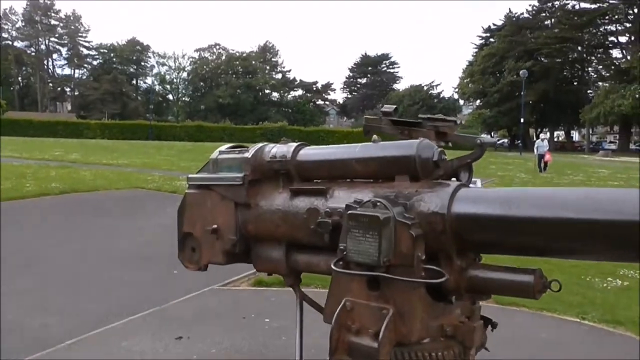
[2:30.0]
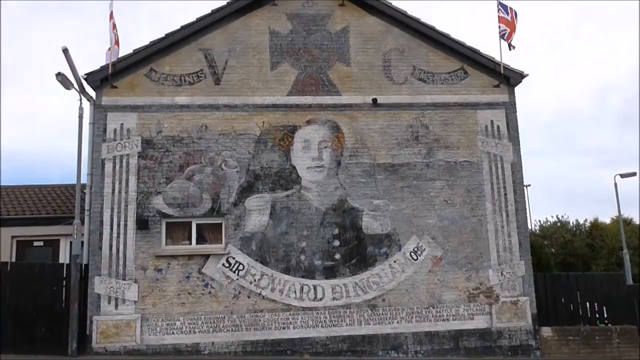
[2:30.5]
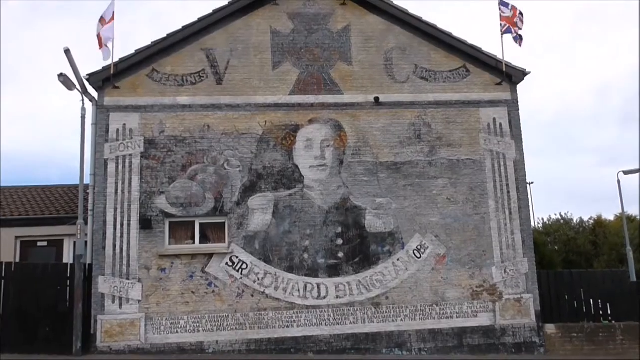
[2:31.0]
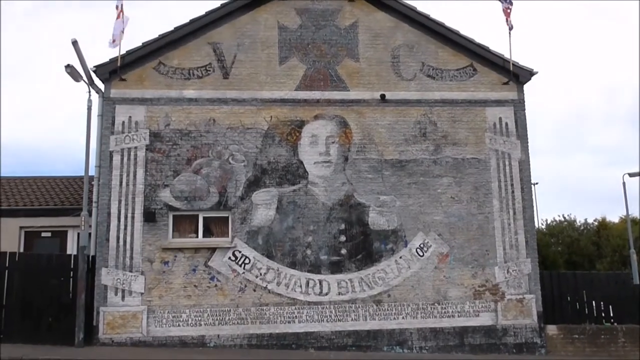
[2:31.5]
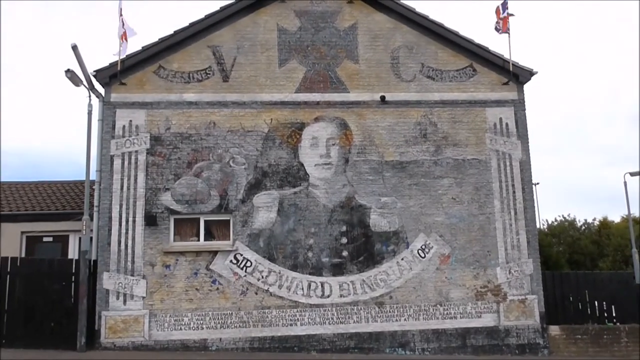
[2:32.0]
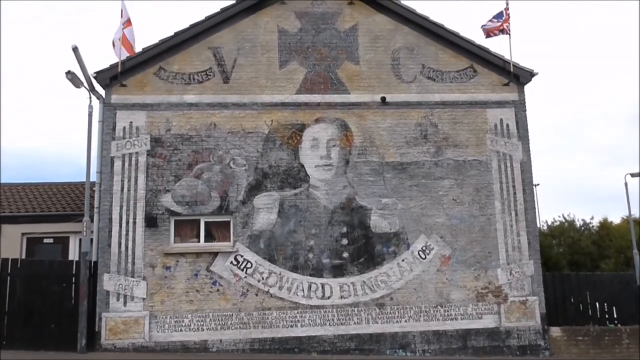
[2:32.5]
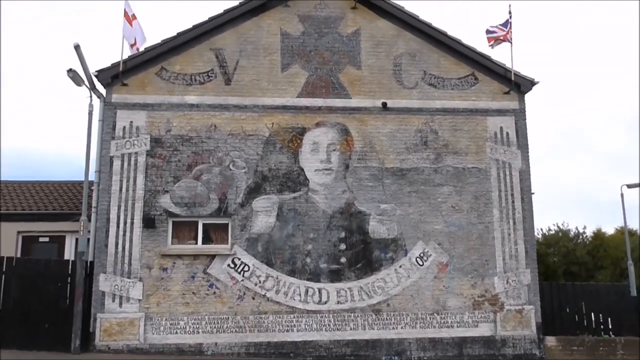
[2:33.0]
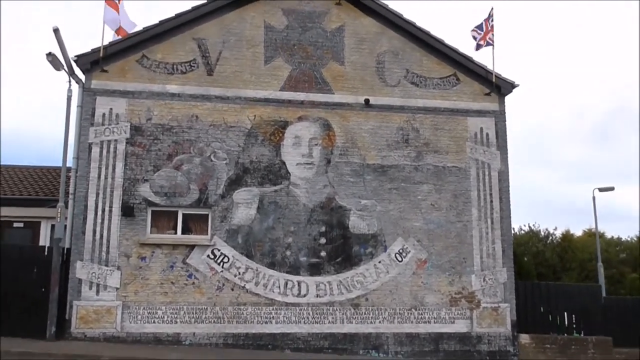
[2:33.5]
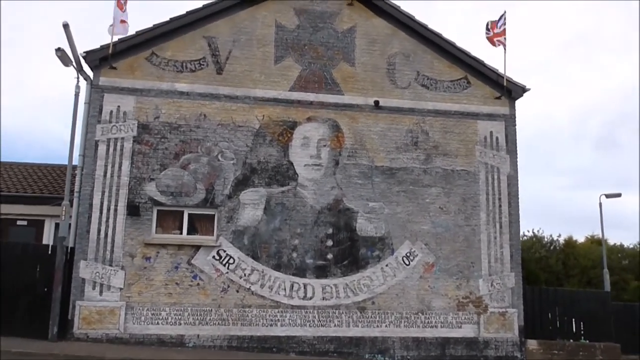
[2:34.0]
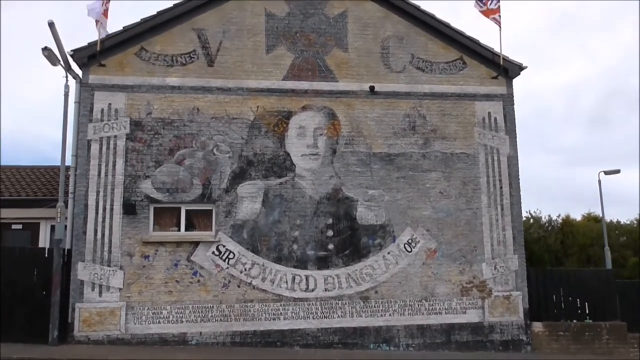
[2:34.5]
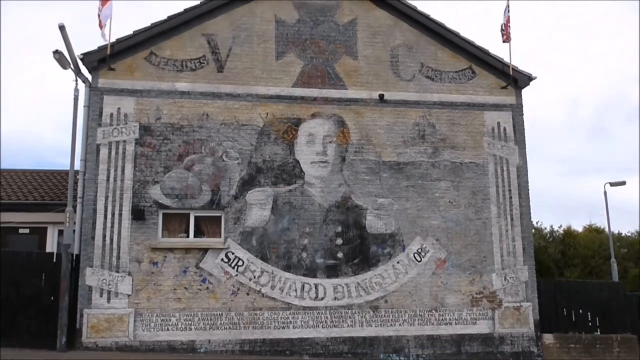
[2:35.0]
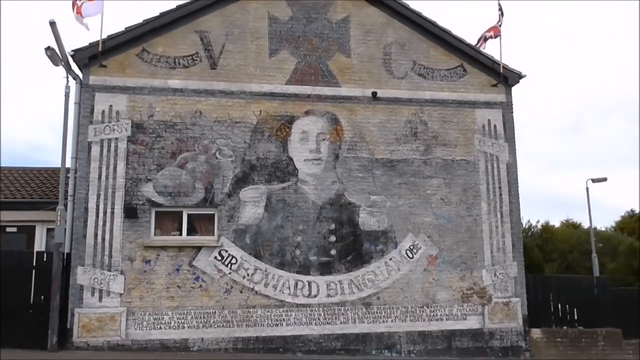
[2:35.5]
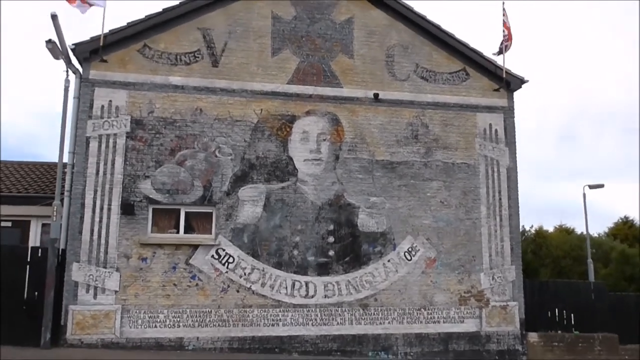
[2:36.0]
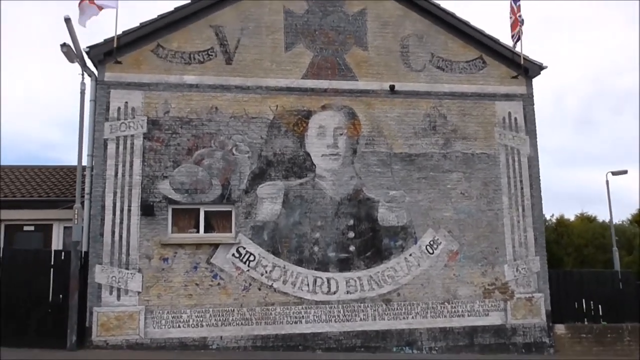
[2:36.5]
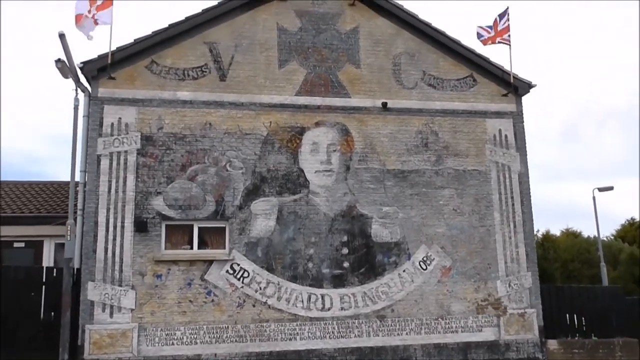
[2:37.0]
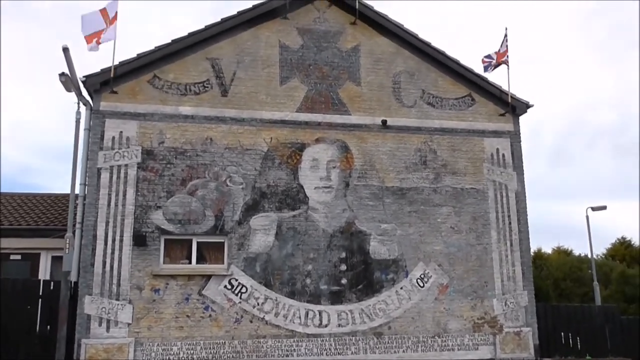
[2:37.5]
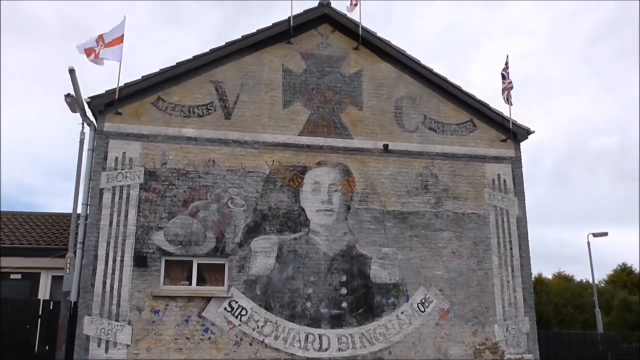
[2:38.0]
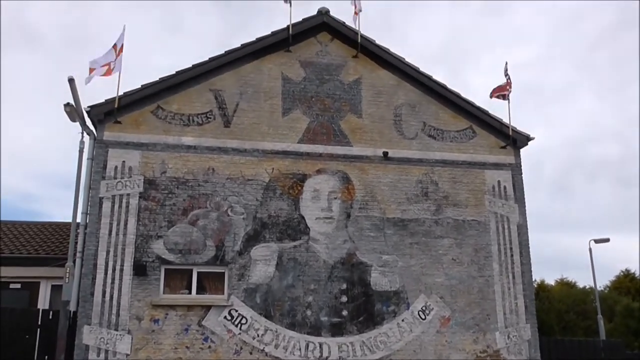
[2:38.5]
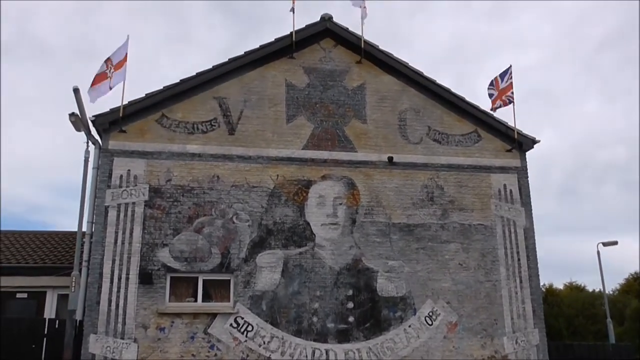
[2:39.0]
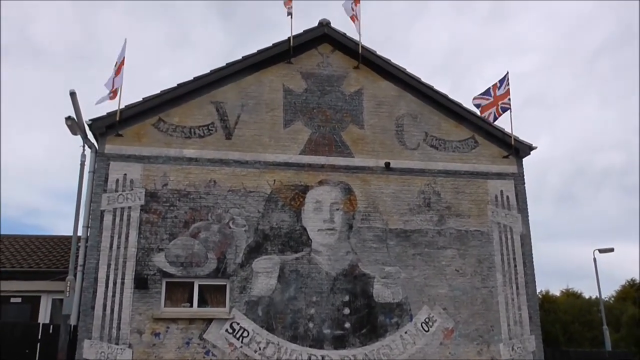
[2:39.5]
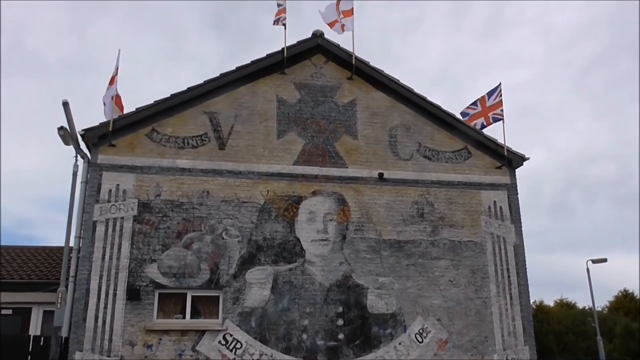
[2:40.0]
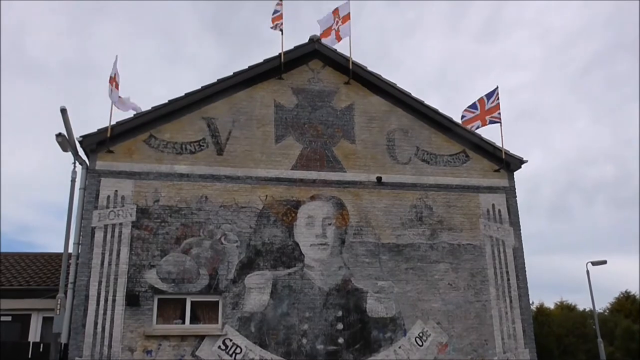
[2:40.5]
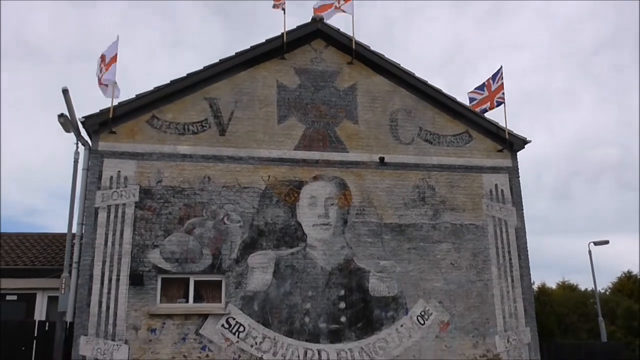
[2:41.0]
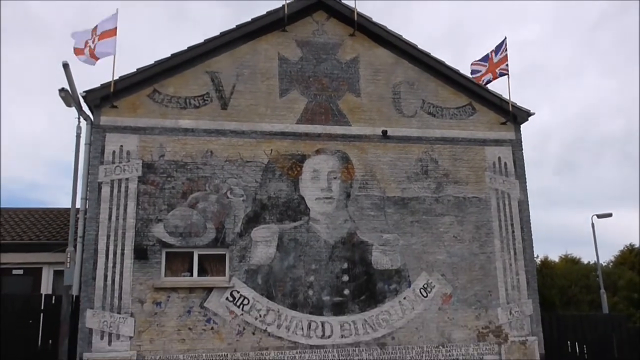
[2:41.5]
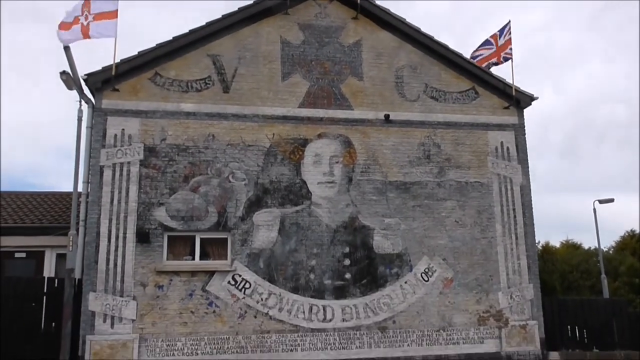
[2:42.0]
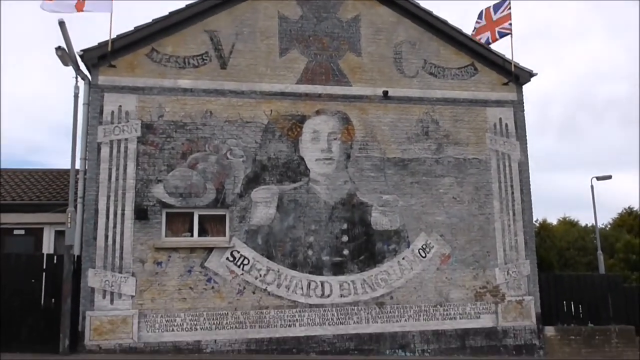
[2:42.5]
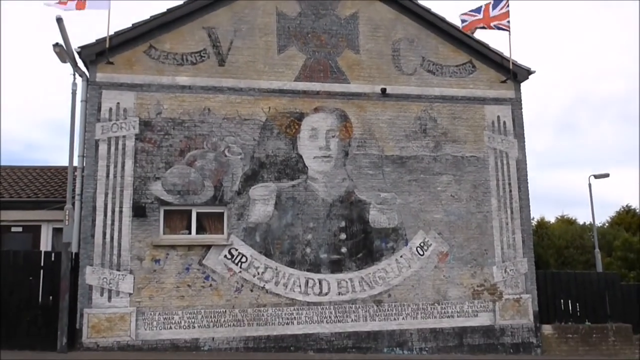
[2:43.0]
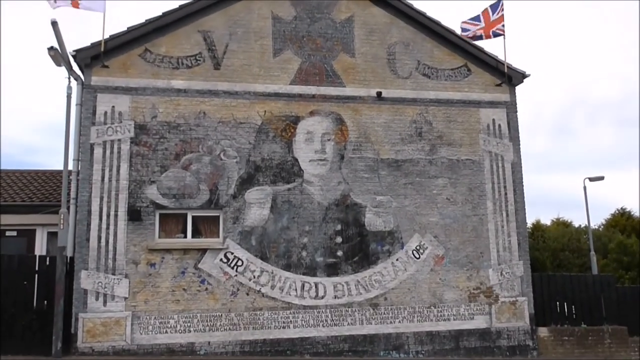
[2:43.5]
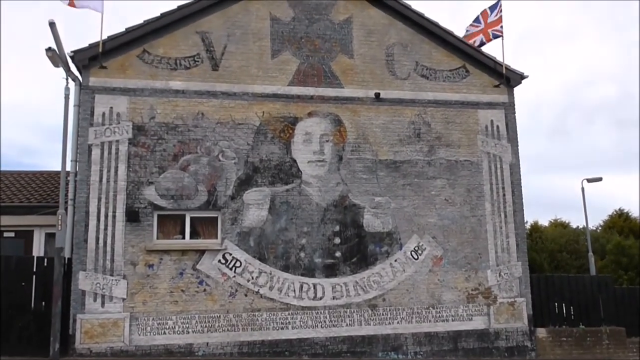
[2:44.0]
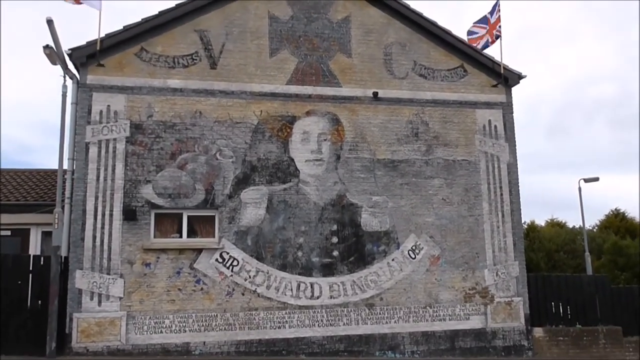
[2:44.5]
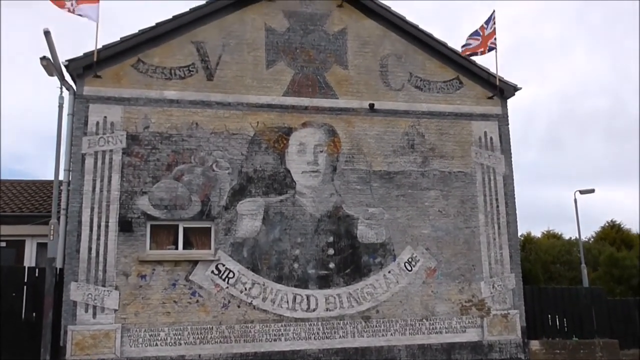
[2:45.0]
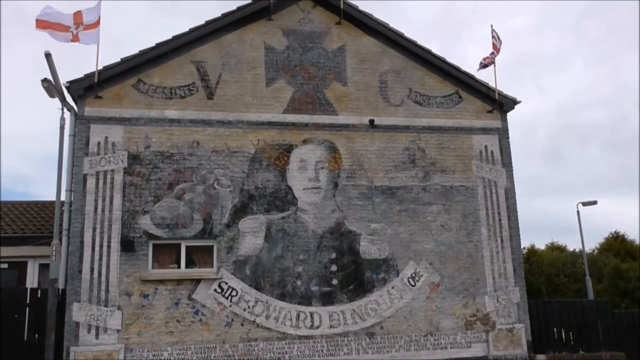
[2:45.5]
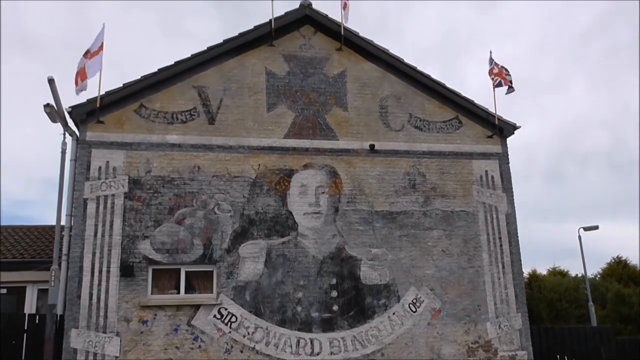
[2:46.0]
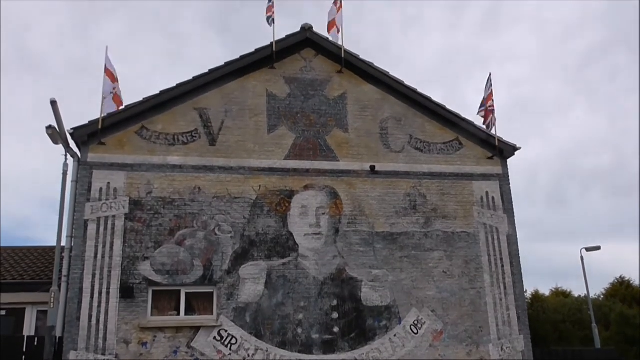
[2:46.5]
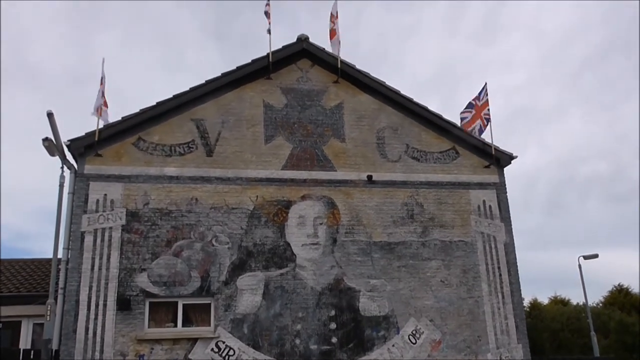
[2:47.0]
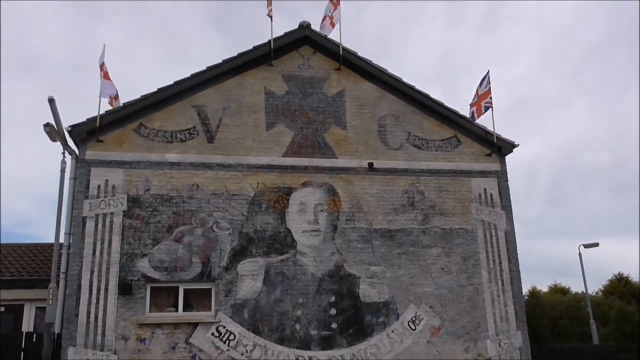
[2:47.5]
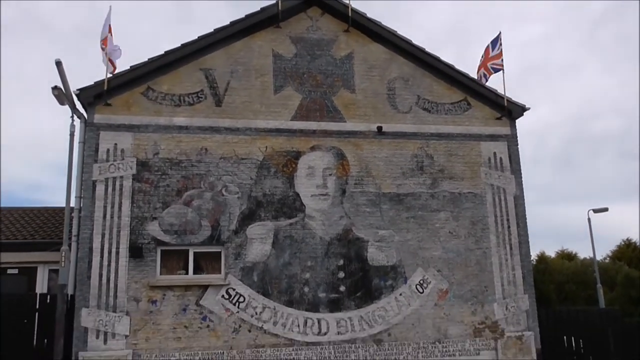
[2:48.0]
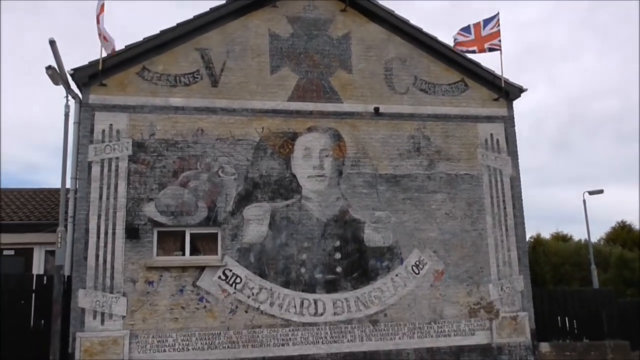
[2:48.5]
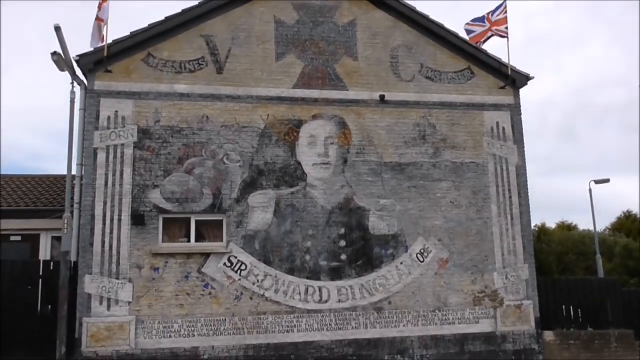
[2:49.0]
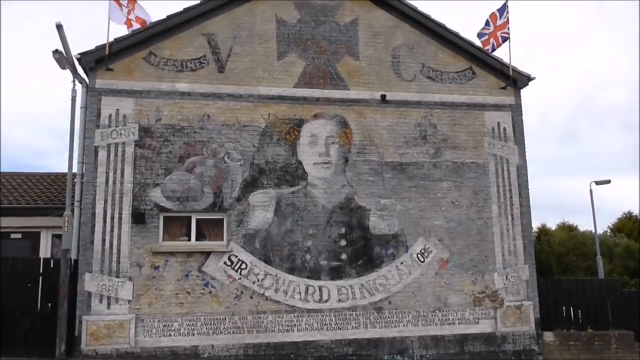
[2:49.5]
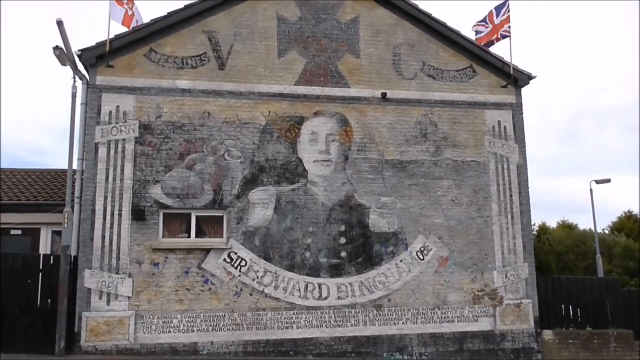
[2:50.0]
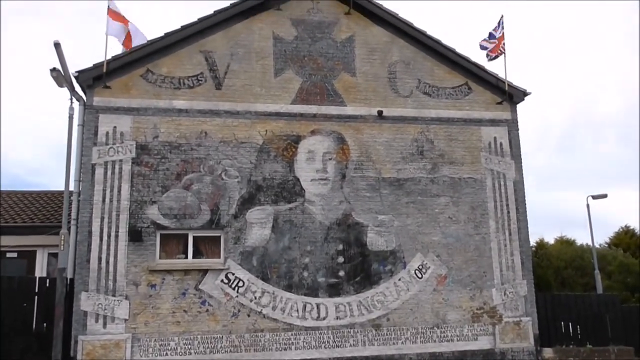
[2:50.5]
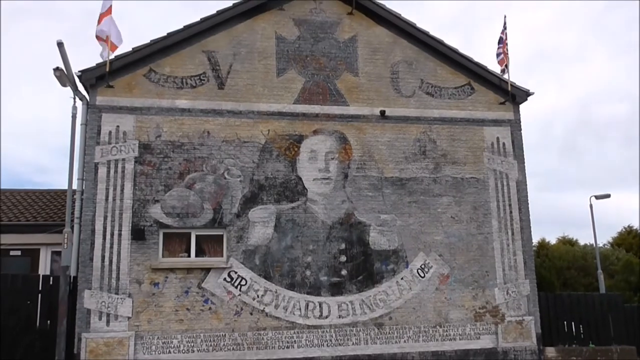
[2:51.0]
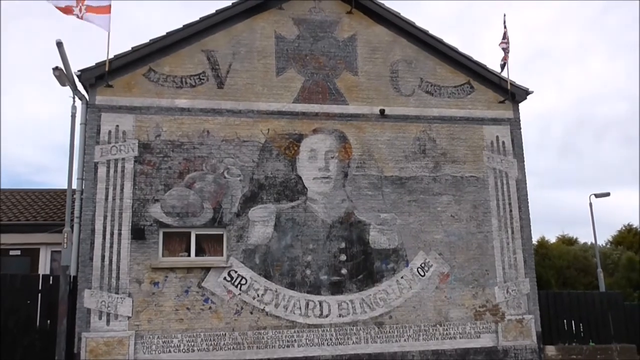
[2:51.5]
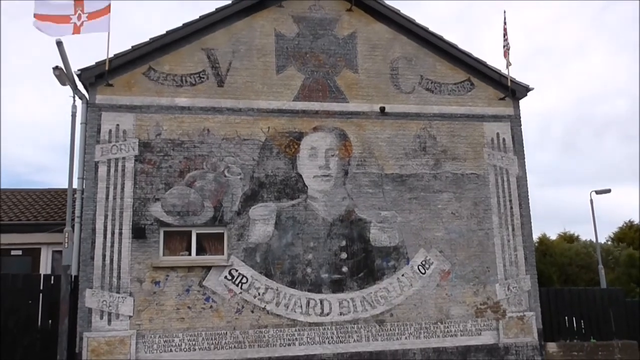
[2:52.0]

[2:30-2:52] Someone films the artillery gun on display in a city park. The gun is mounted on a pedestal in a paved area, with green lawns beyond it. Trees run along the edges of the park, a very high hedge is to the left of the screen, and white wildflowers are throughout the lawns. In the background is a city street with cars parked along it and a row of two-story buildings. A person walks across a lawn toward the gun. The scene then switches to the side of a building painted with a mural. A Union Jack is on the right side and what looks like the English flag is on the left. A portrait of a man in a military uniform is painted on the building, with his name on a banner below reading "Sir Edward Bingham OBE." Above him a cross is painted on the wall, with the letters V and C painted in black on either side of it, and there appear to be images of troops painted behind him on the left. The mural is gray and white, and the bricks of the building also look gray, white and tan.